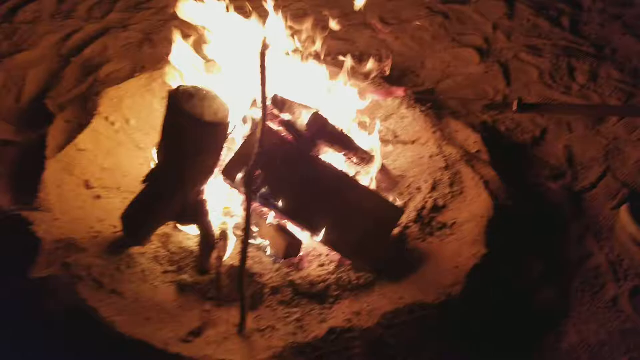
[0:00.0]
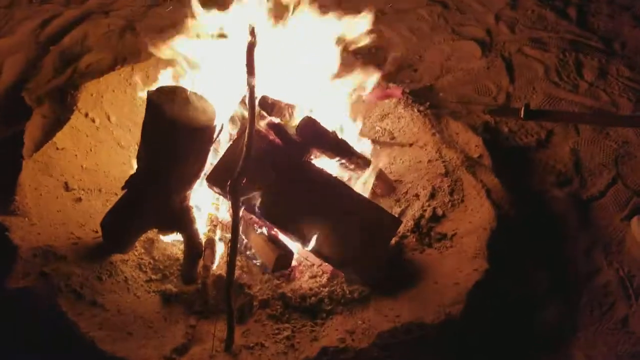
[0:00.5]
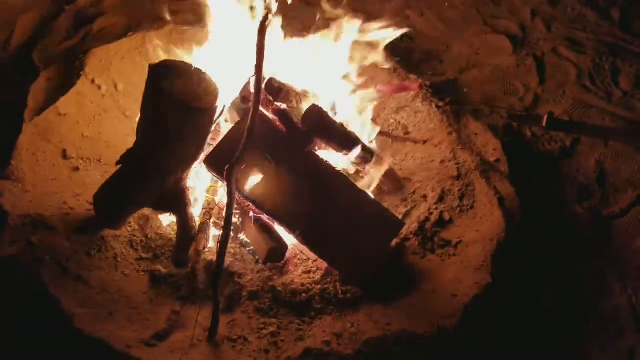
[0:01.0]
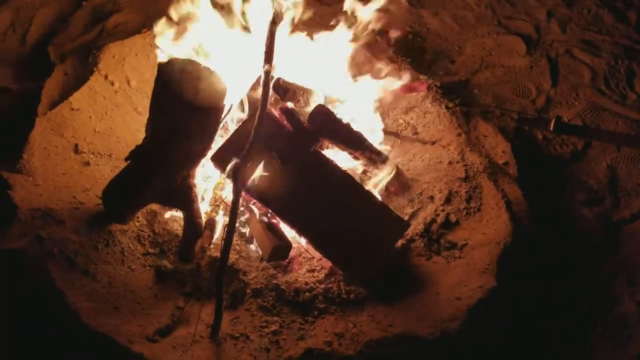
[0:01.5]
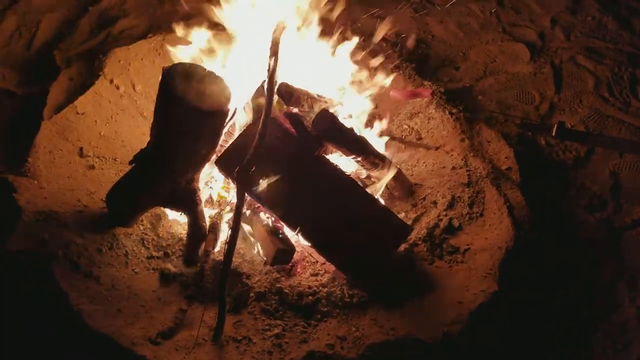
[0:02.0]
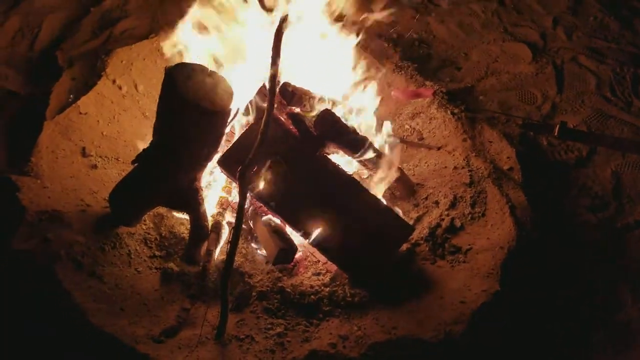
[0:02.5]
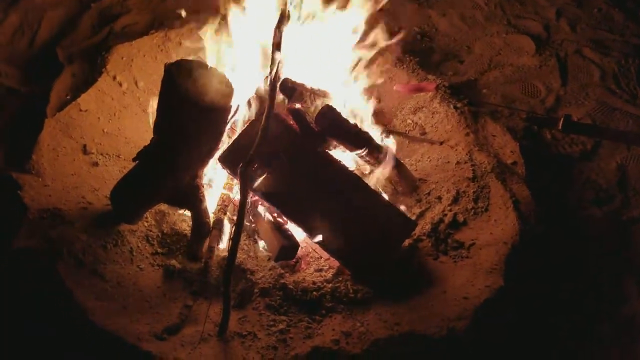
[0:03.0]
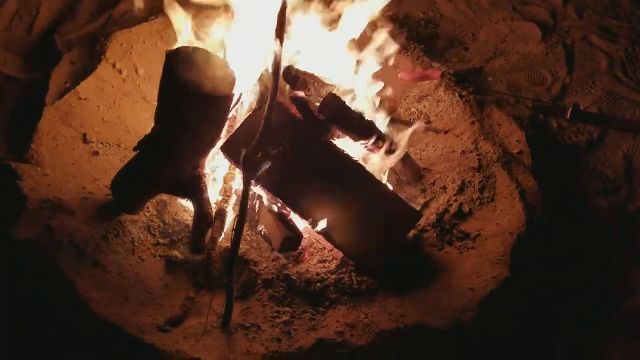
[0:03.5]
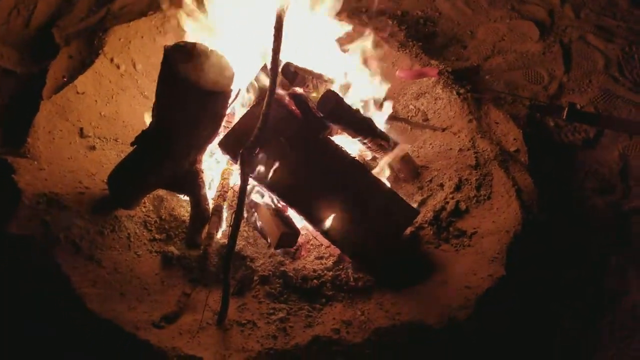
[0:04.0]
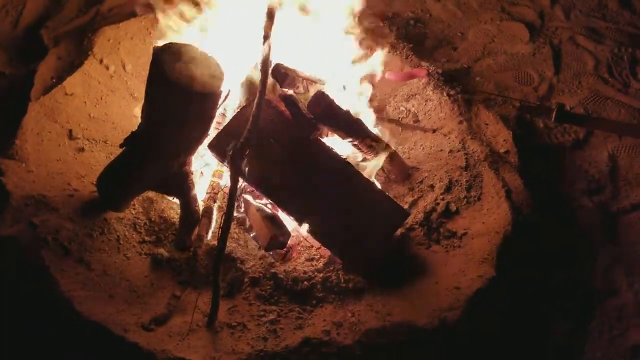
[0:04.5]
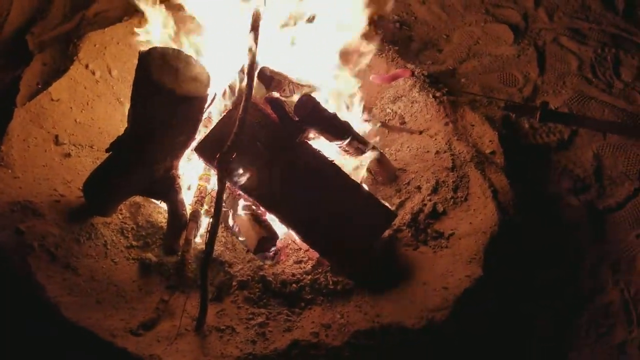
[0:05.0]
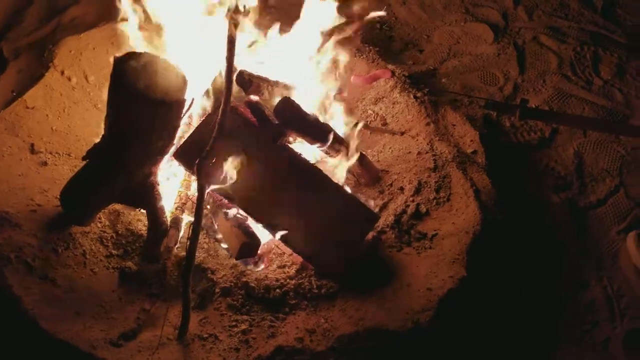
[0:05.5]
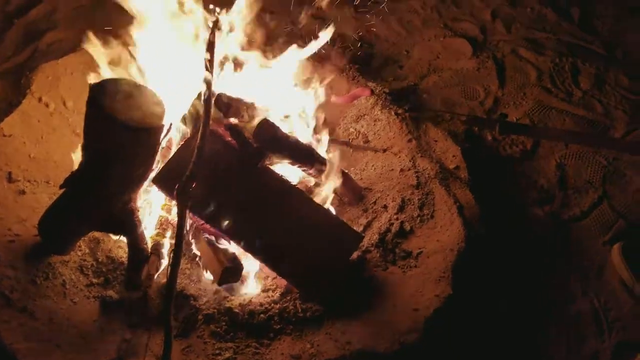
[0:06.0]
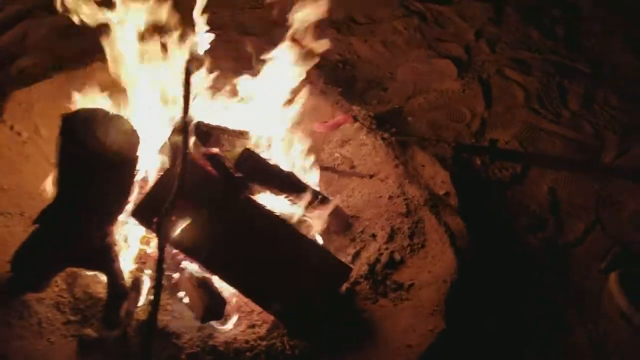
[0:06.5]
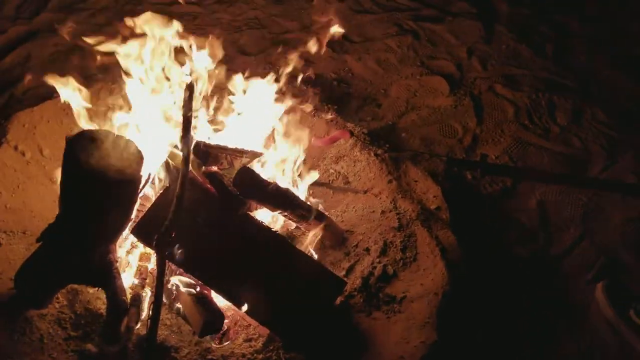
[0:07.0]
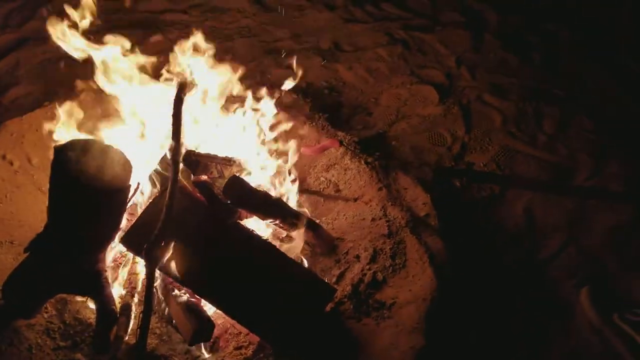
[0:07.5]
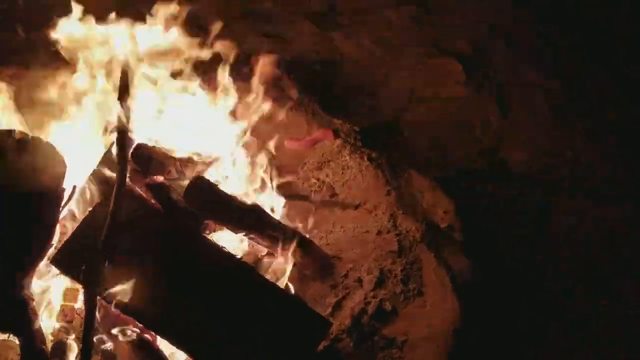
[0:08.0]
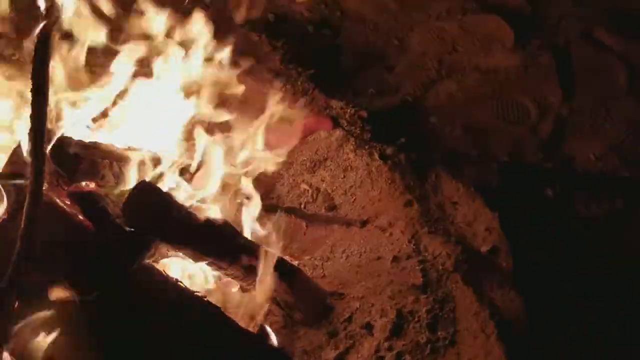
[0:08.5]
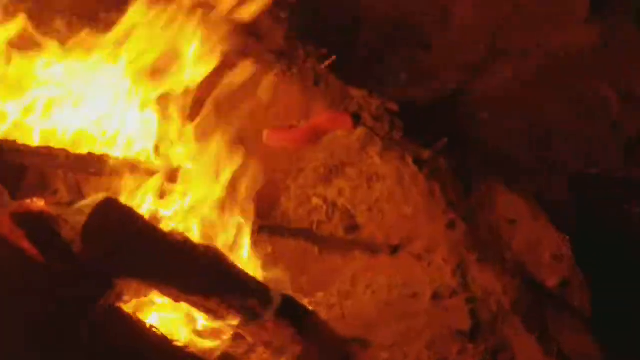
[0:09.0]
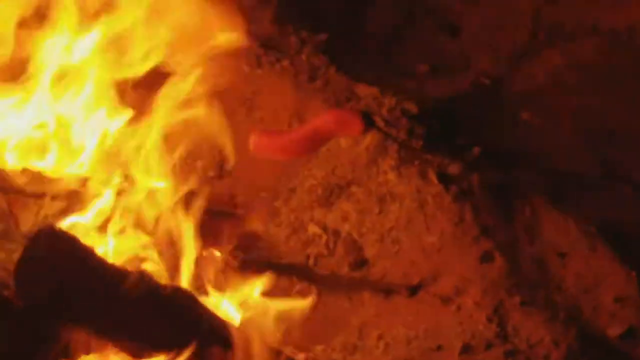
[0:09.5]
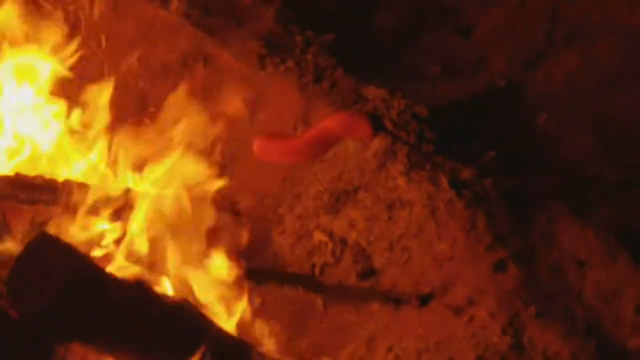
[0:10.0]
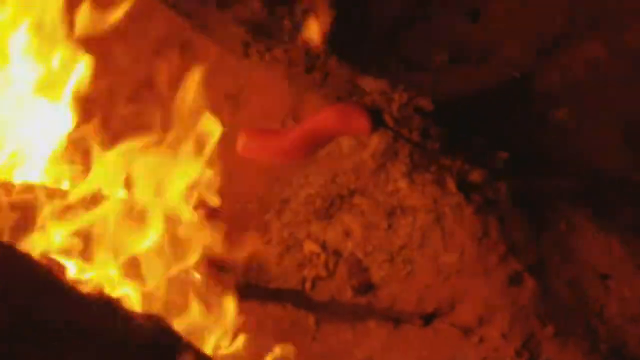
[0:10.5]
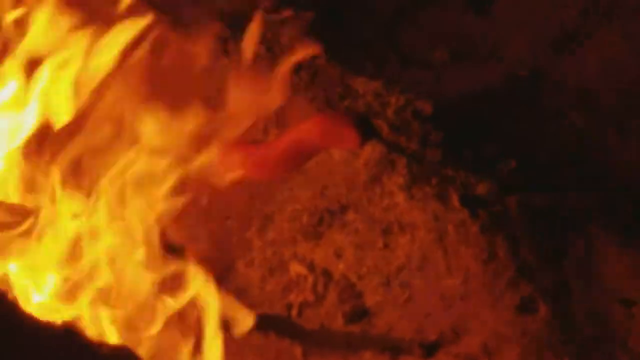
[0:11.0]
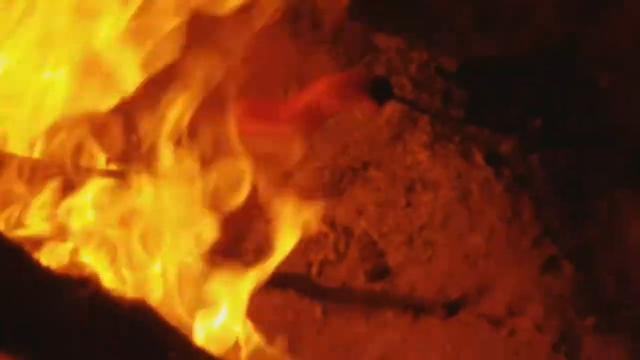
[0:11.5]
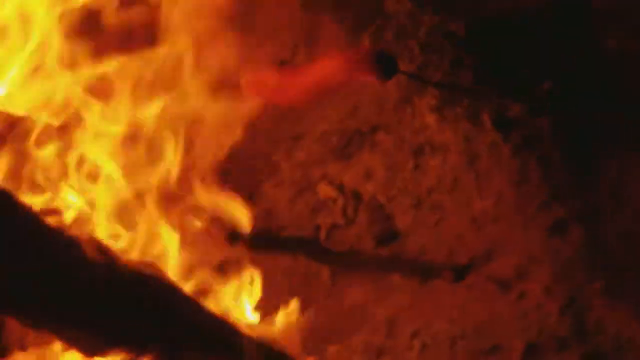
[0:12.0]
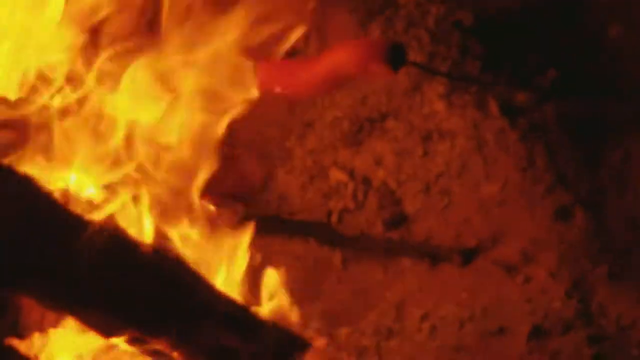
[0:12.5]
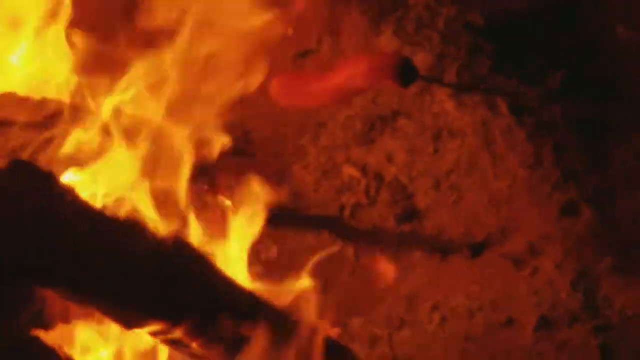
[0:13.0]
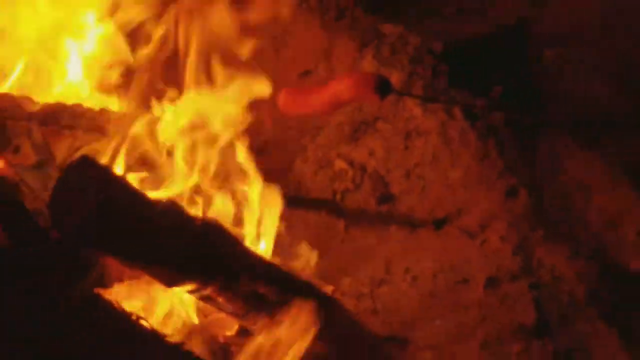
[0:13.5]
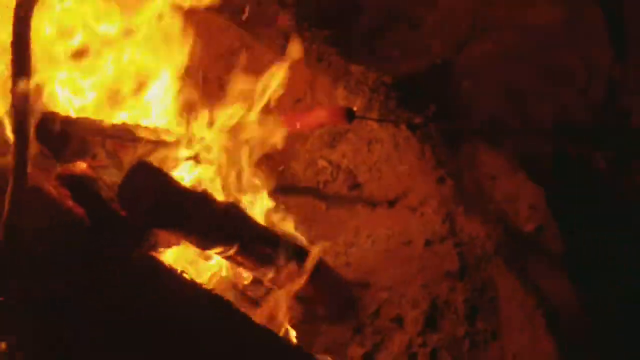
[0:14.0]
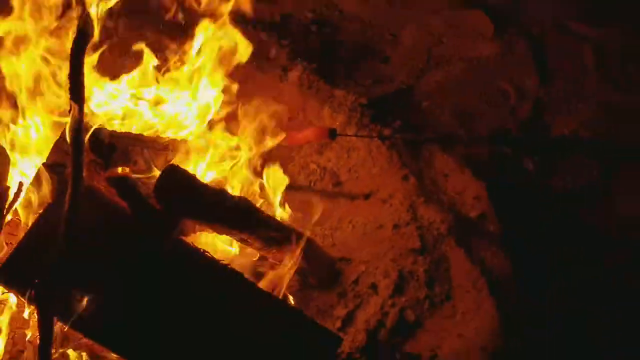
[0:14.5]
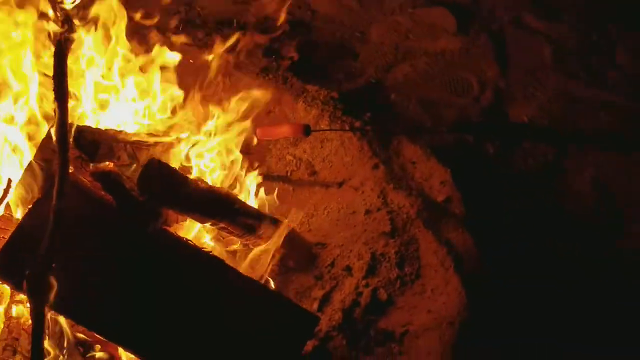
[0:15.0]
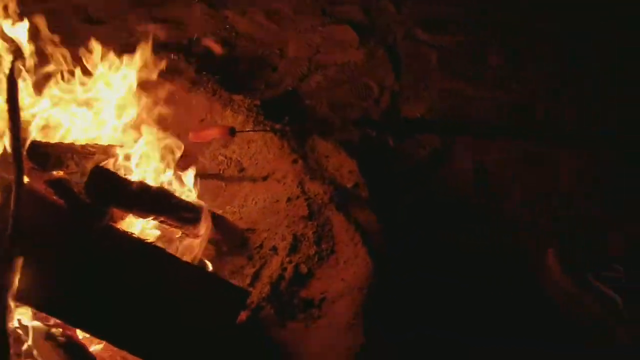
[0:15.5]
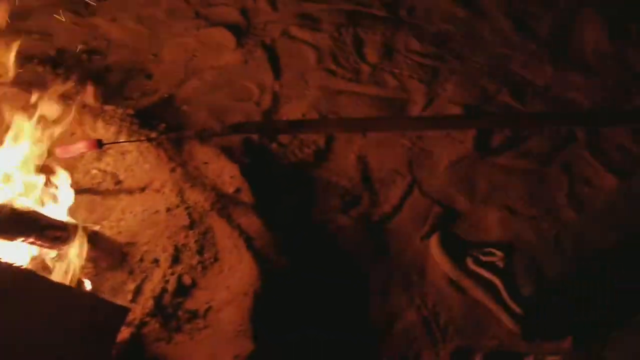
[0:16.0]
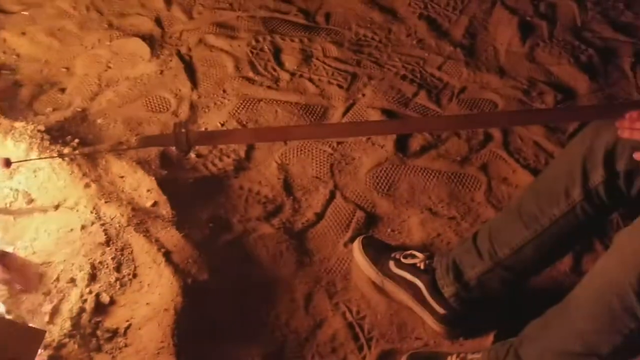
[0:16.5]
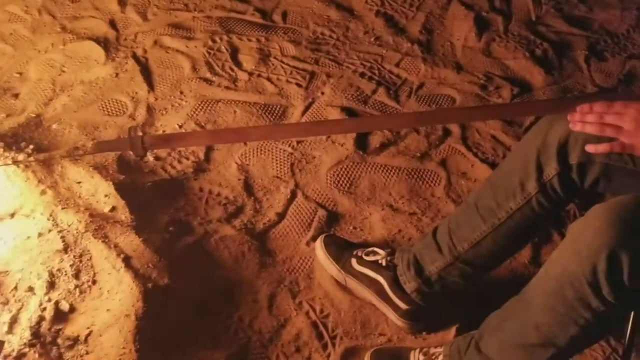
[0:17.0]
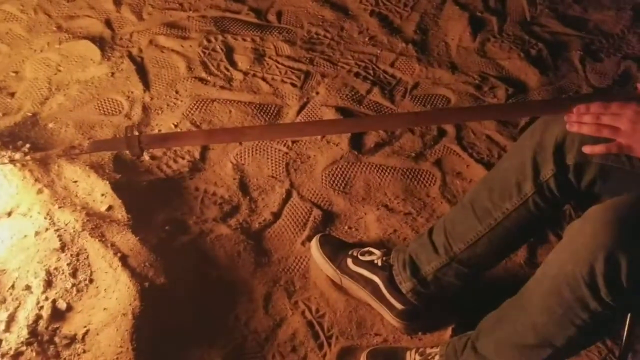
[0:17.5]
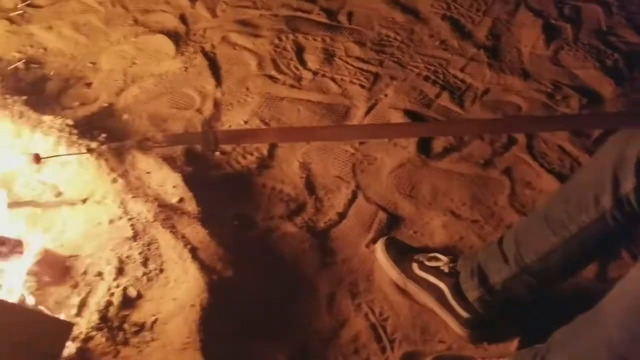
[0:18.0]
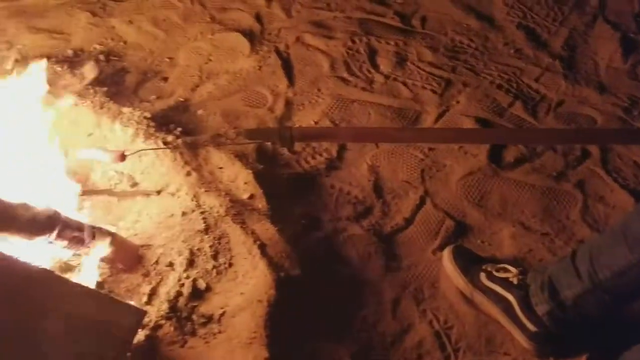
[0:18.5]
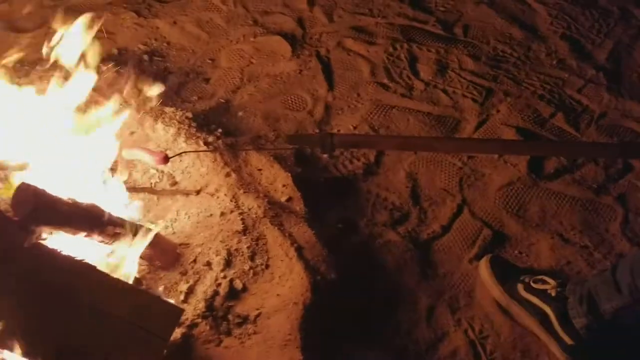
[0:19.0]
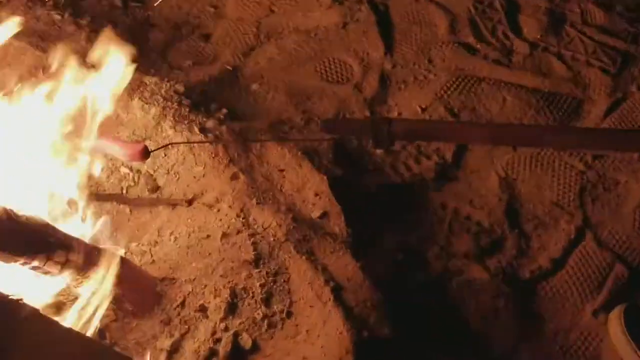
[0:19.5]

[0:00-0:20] Firewood burns in a fire on the ground. Something pinkish is visible, along with a stick that is moving. Dirty black-and-white Vans sneakers and black trousers appear on the soil, where two shoe prints have been left as the person moved. There is a circle around the fire; apparently the person shifted the sand and soil into a circle and placed the wood in the middle.